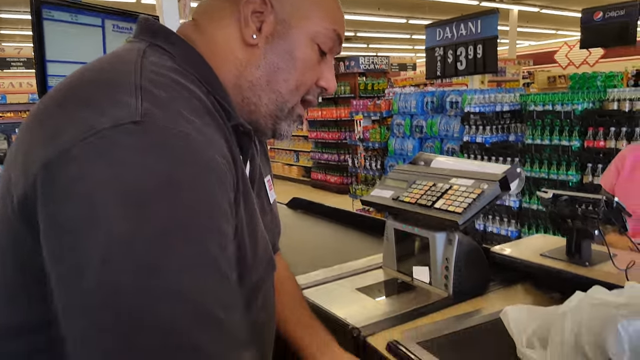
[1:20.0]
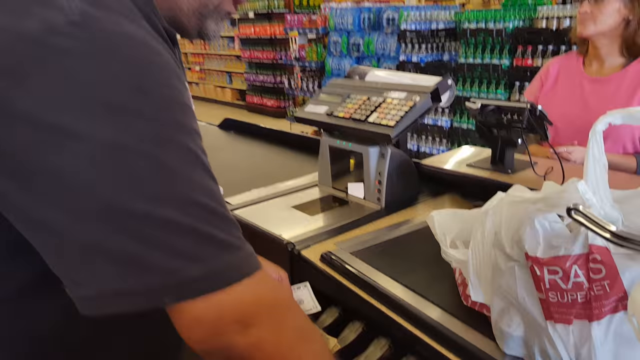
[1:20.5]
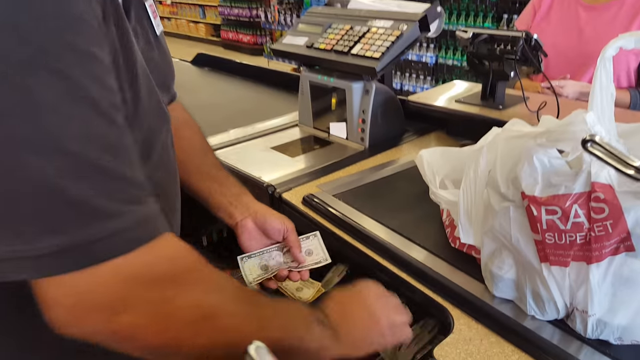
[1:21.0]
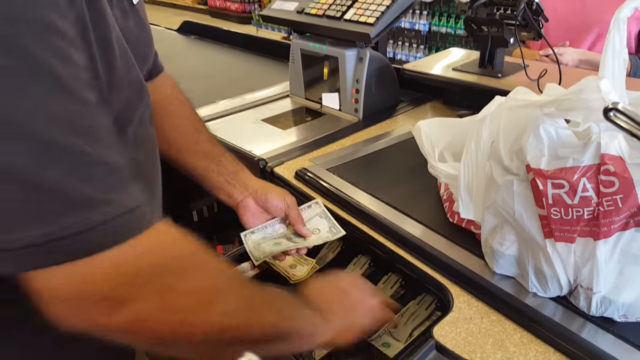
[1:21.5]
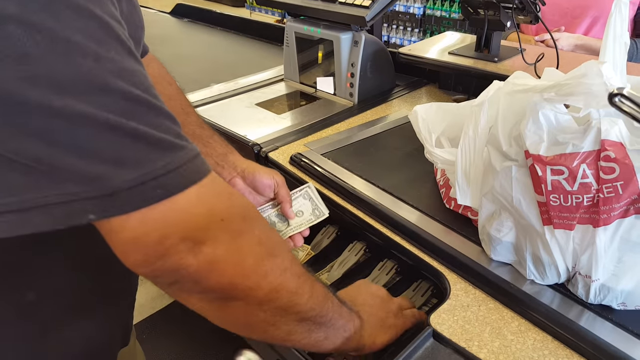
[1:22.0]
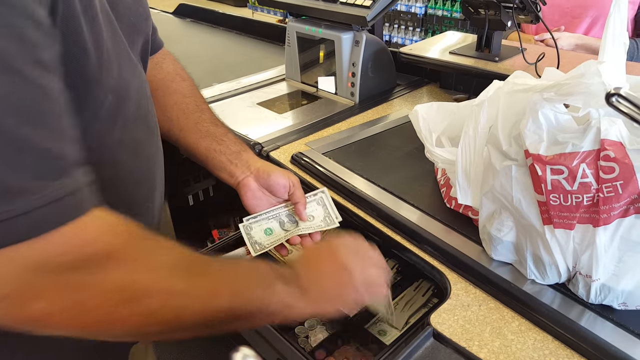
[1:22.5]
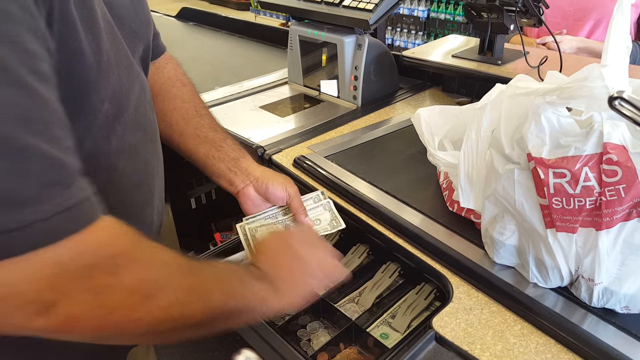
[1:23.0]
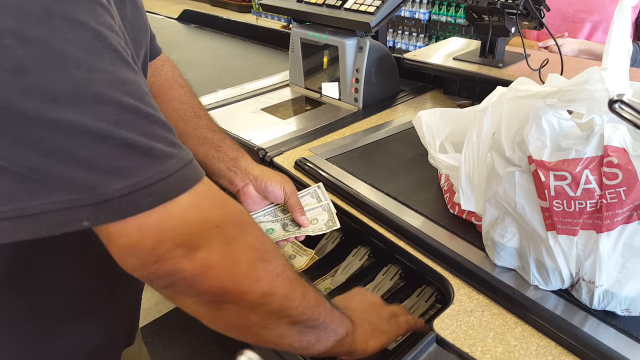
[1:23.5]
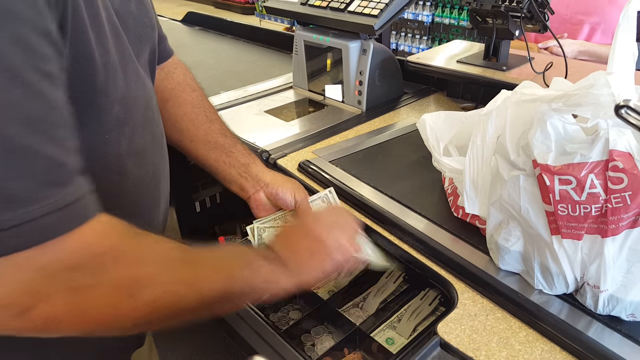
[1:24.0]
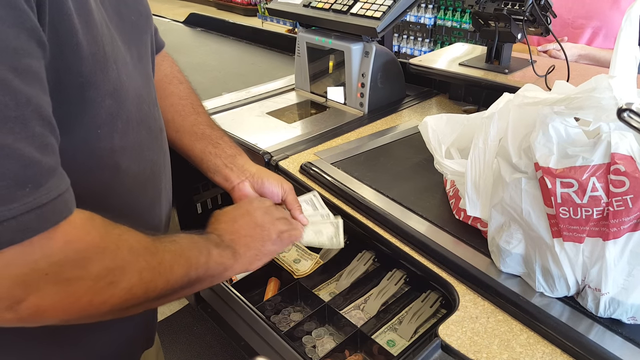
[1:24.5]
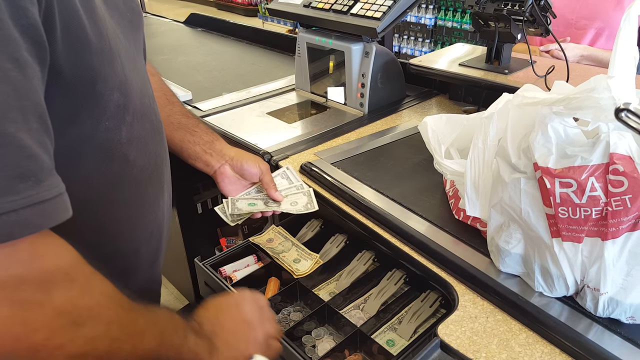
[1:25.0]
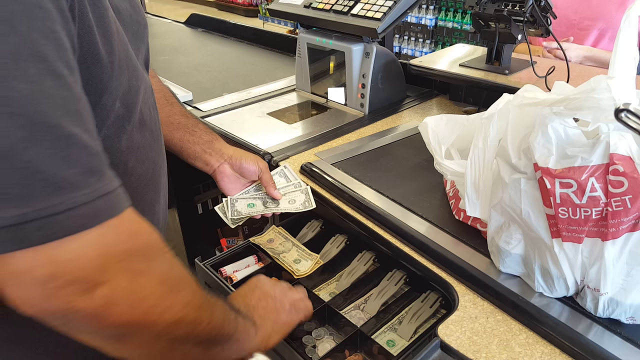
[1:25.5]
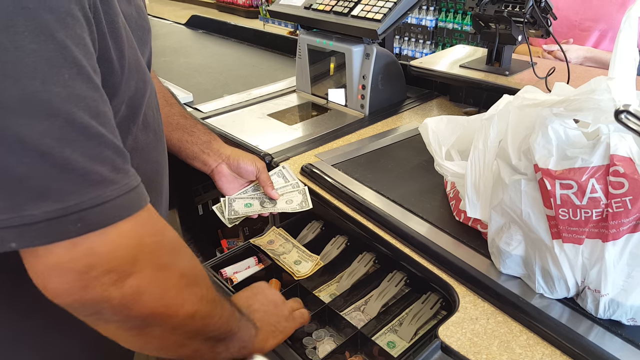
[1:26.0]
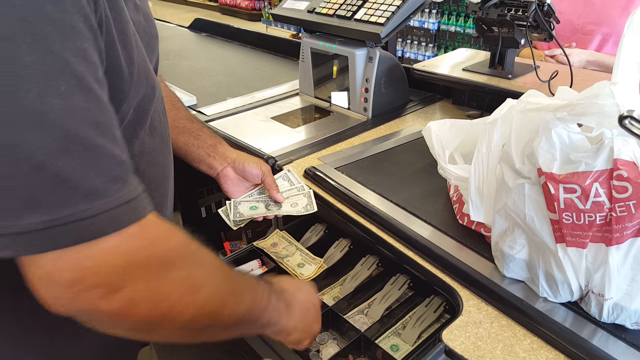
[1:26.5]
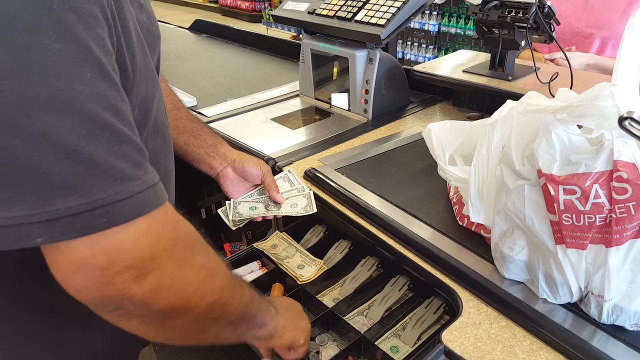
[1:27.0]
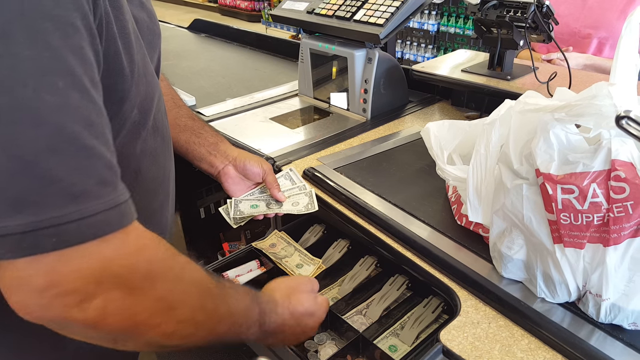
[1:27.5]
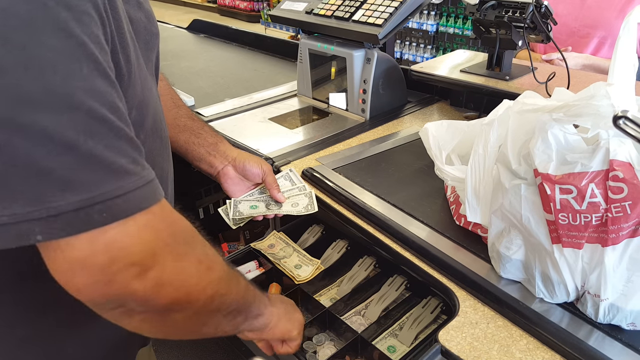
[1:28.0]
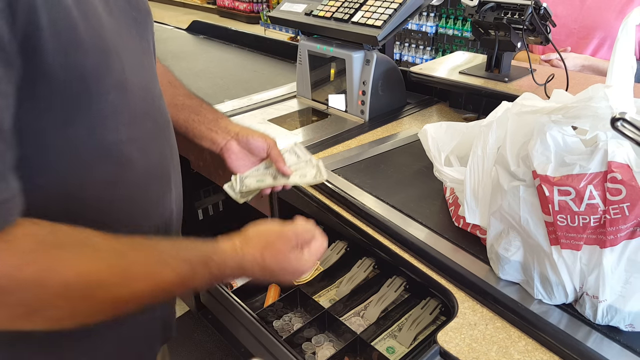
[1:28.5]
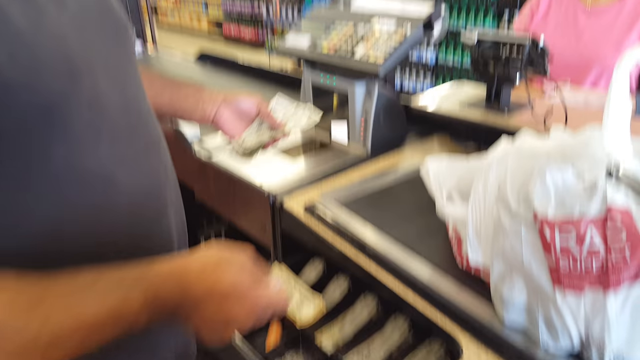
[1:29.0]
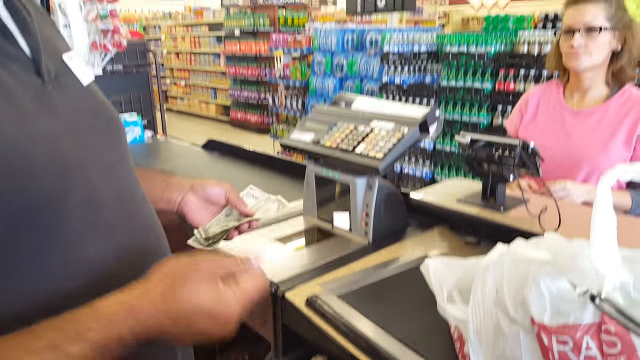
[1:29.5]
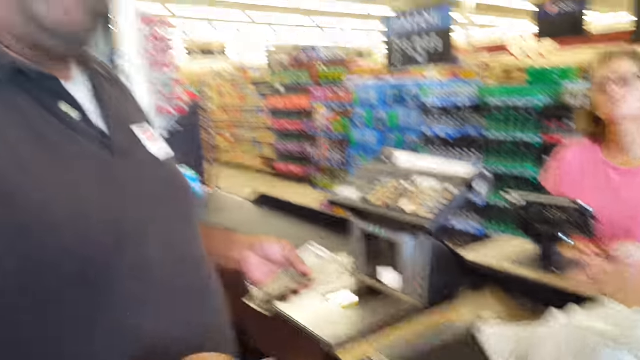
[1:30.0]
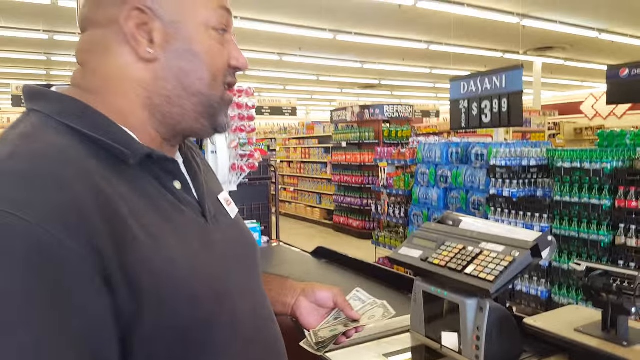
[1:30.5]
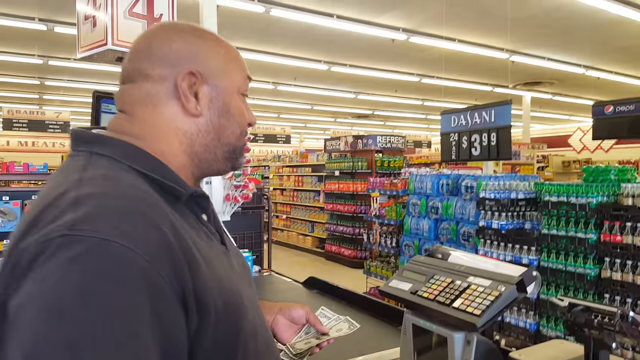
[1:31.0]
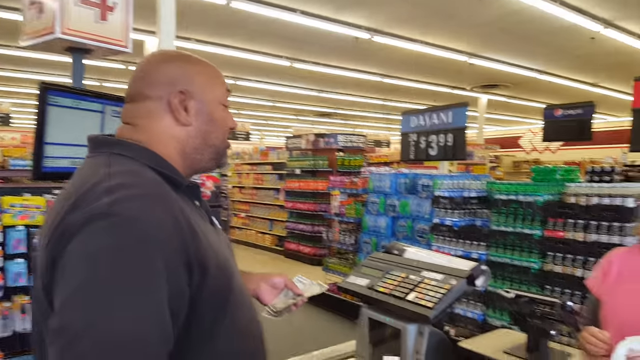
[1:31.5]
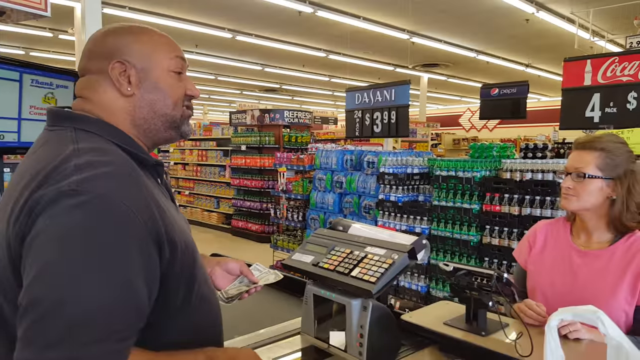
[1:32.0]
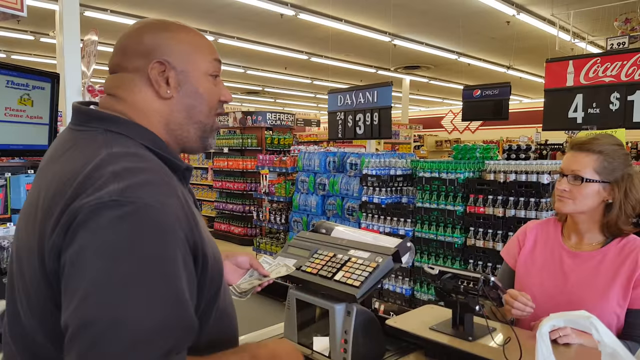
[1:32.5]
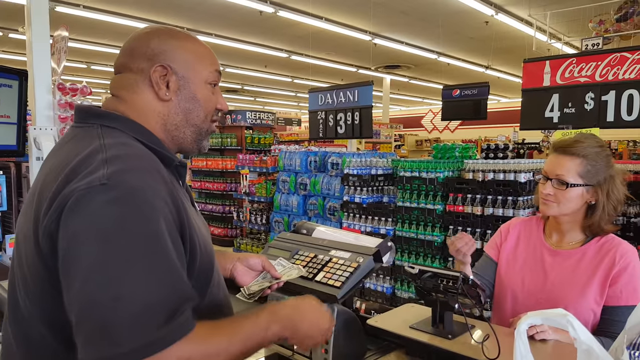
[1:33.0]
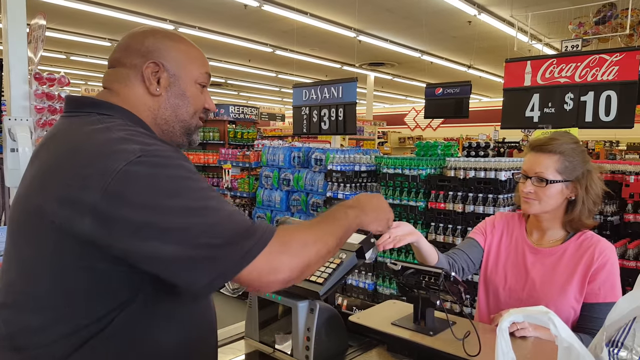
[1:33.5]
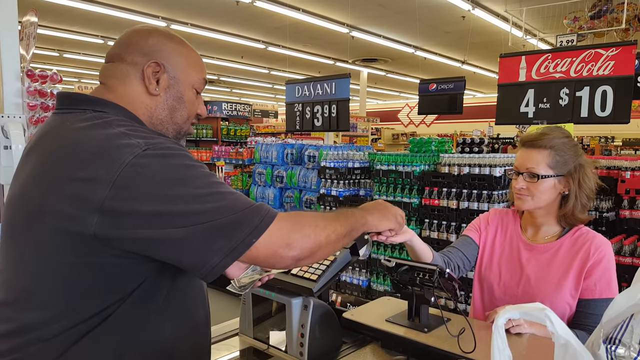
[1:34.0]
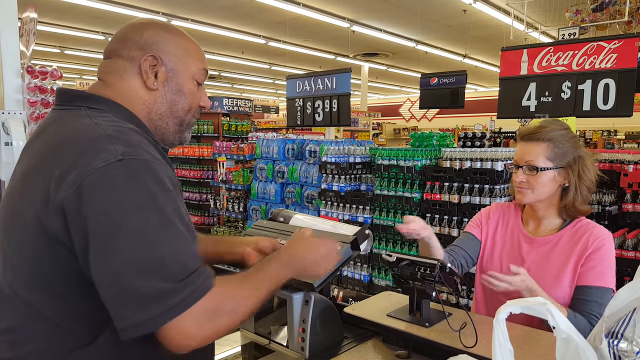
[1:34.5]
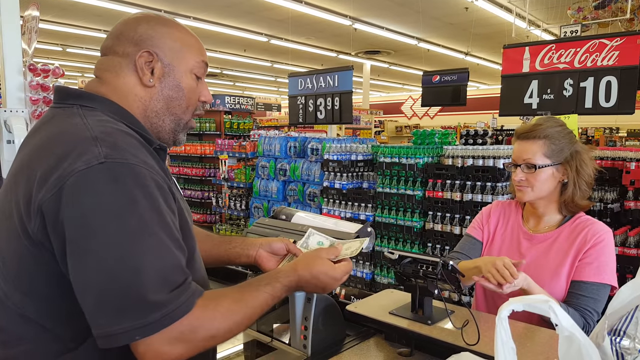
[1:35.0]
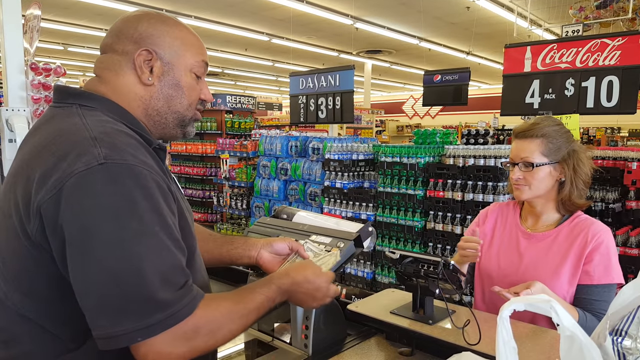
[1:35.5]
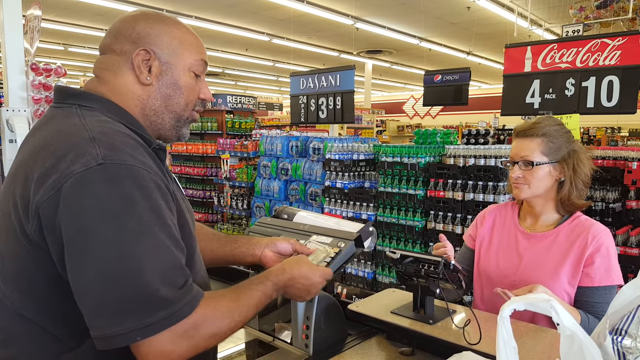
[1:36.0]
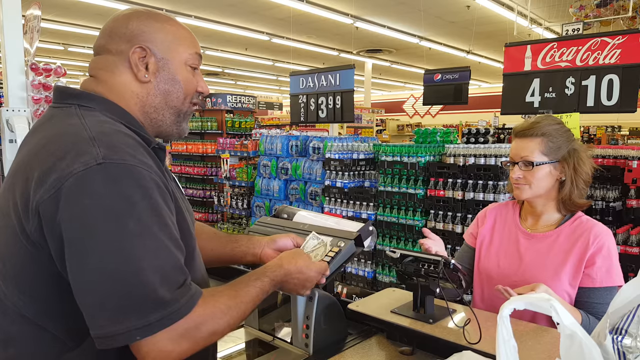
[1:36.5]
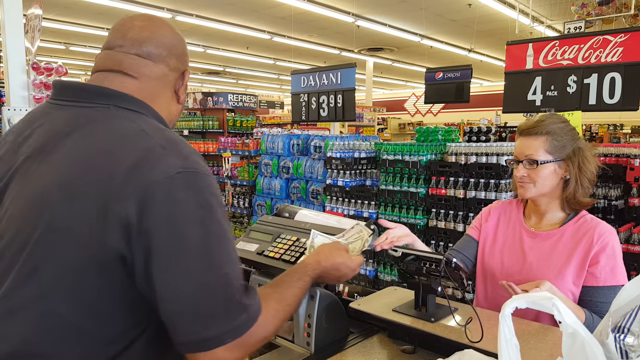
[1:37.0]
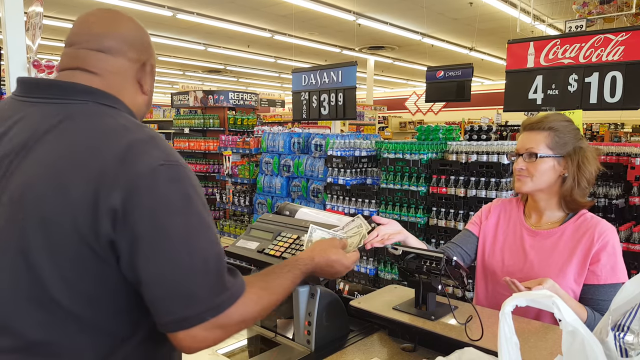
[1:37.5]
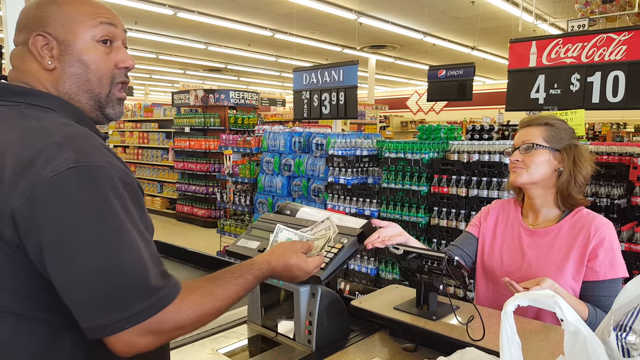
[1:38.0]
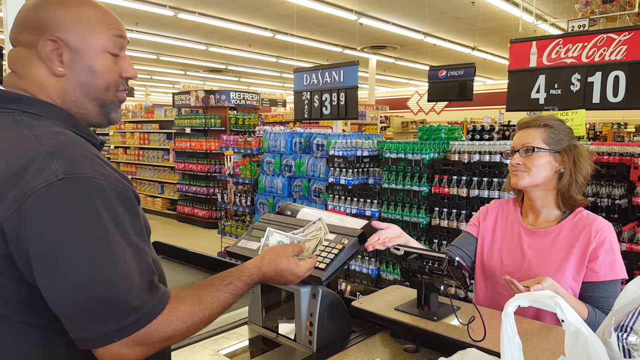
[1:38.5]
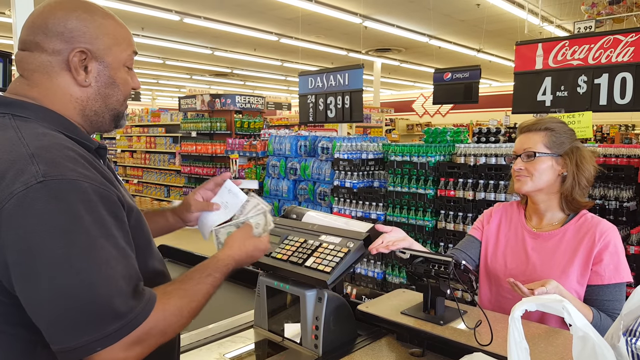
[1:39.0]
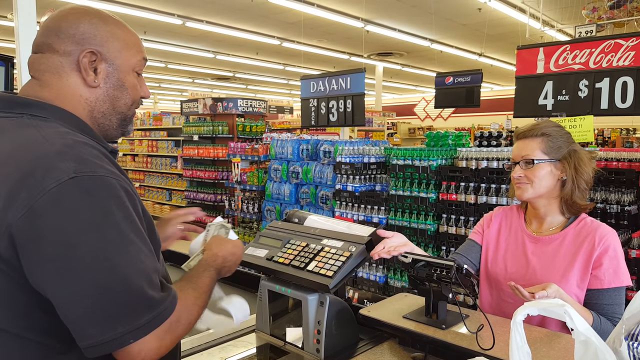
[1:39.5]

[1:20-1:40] The man takes money out of his register: he holds a $5 bill and a $1 bill in his left hand, then takes another $1 bill with his right hand and places it in his left hand, and then another, so that he has a total of $9 in his left hand. The register holds a roll of quarters and, on the left side, two rolls of pennies. He takes what looks like about three dimes and closes the register. He gives the woman her dimes first, placing them in her right hand. He counts the bills back before handing them over, gets the receipt and puts it on the bottom of the bills, then hands the receipt and the bills to her right hand at the same time.